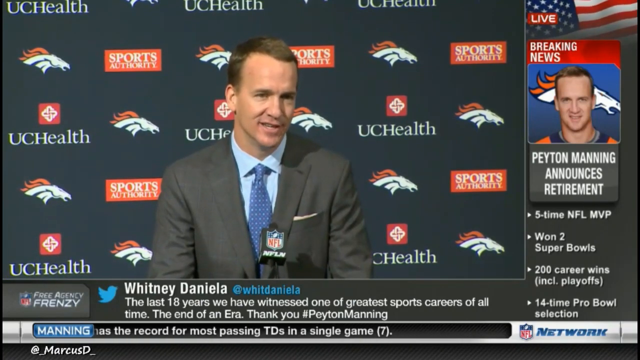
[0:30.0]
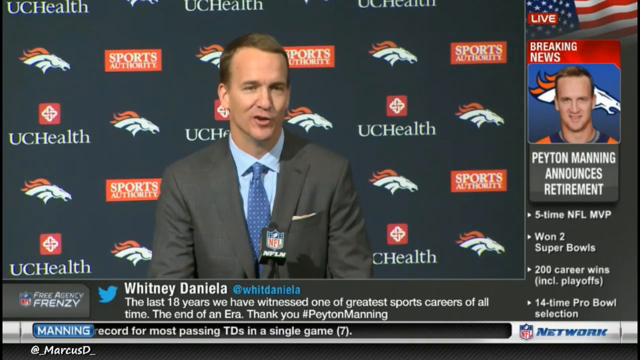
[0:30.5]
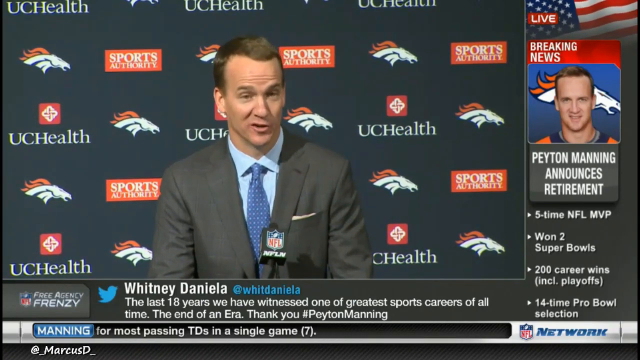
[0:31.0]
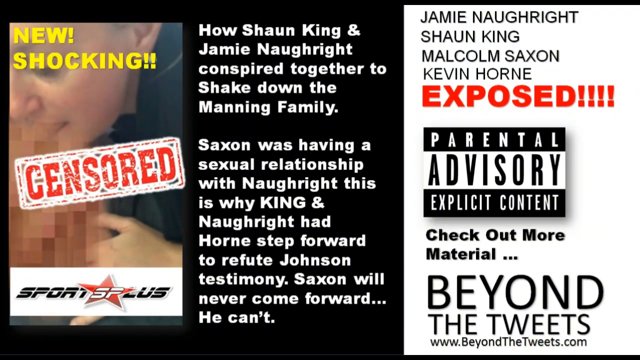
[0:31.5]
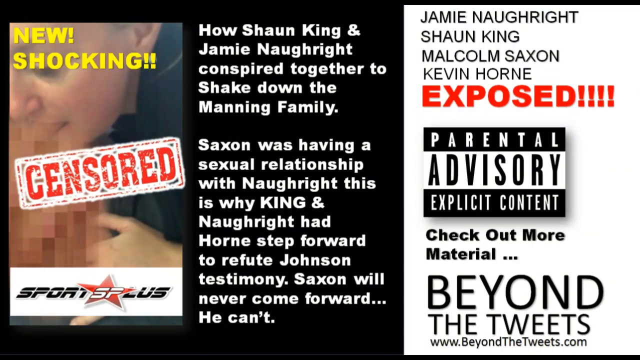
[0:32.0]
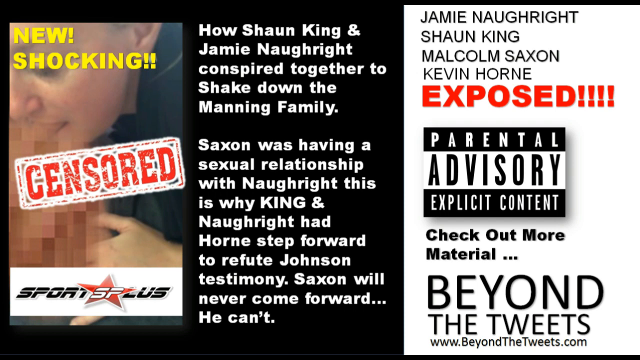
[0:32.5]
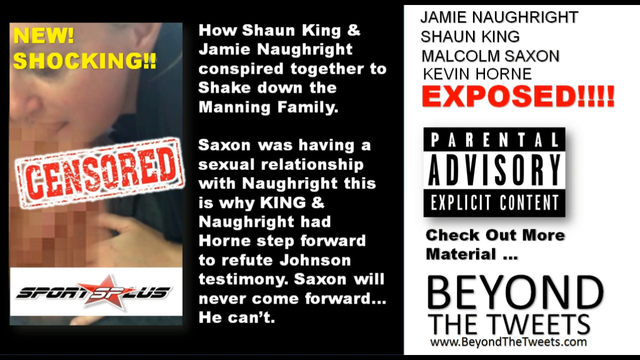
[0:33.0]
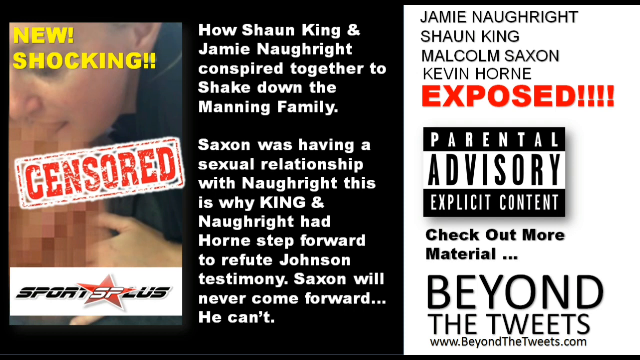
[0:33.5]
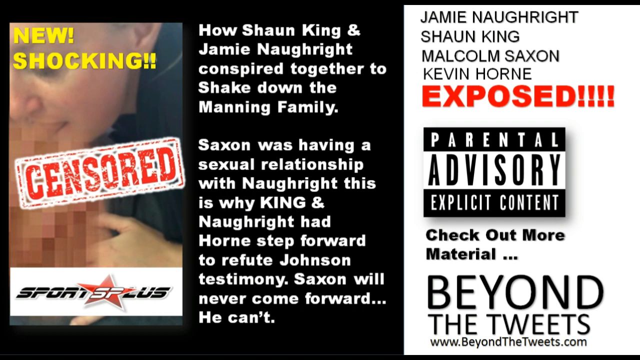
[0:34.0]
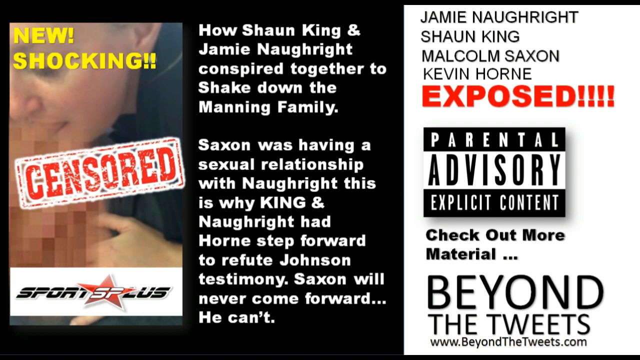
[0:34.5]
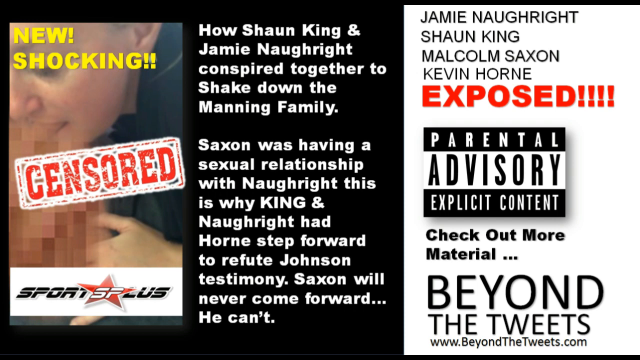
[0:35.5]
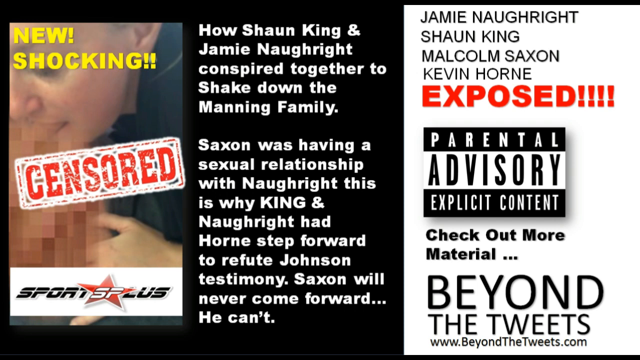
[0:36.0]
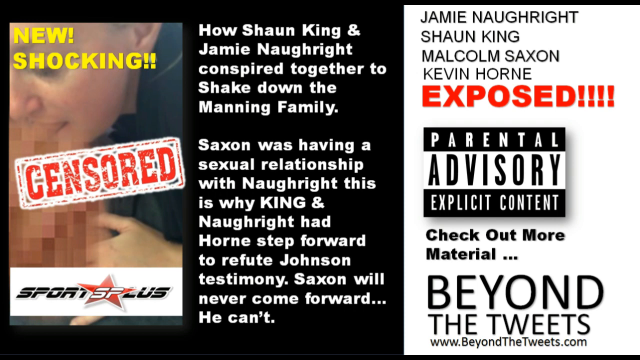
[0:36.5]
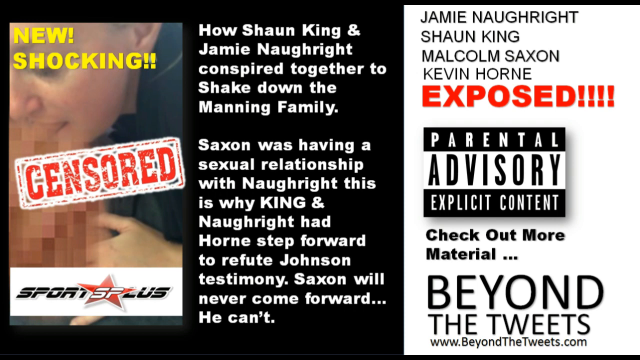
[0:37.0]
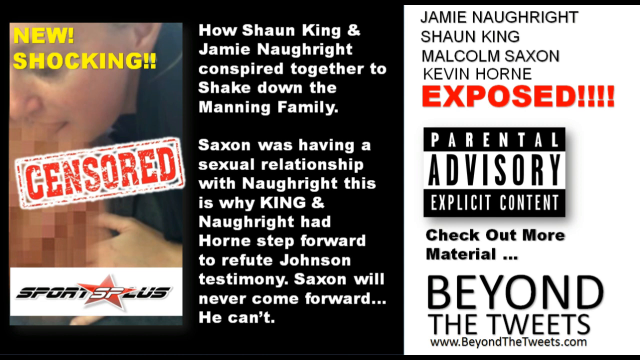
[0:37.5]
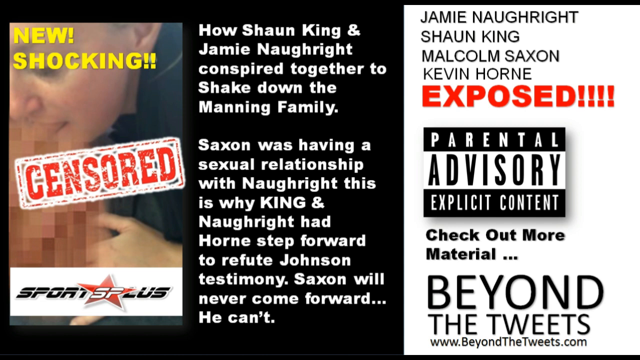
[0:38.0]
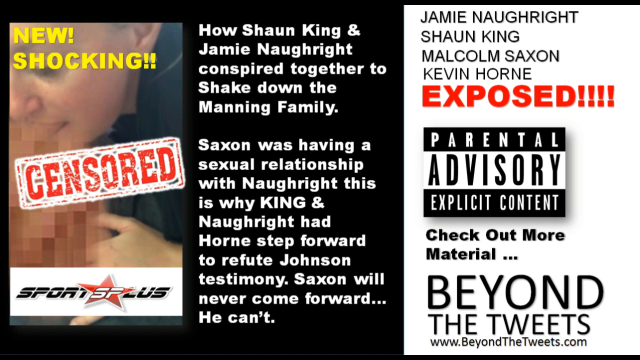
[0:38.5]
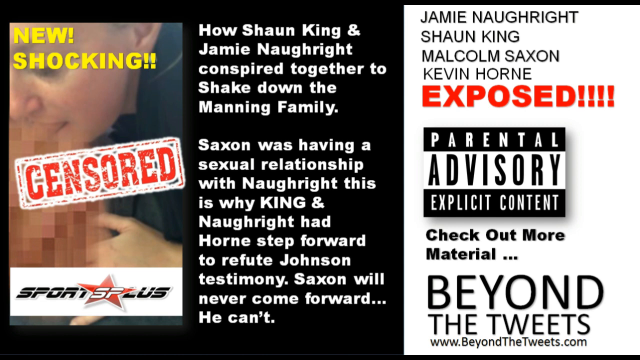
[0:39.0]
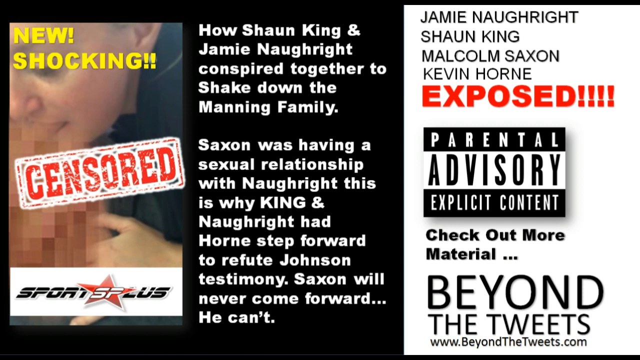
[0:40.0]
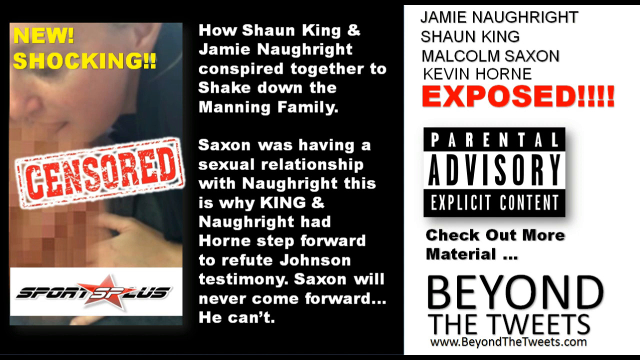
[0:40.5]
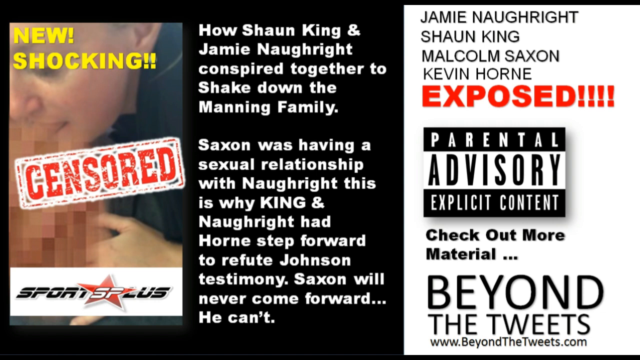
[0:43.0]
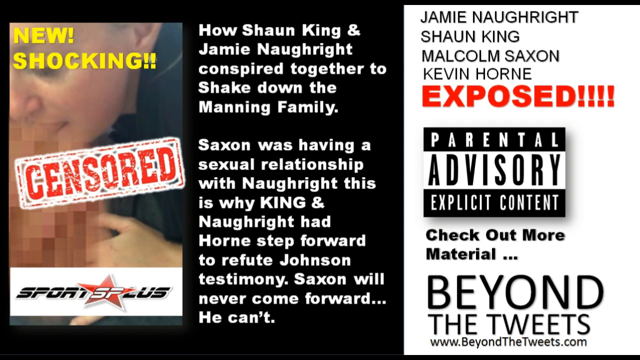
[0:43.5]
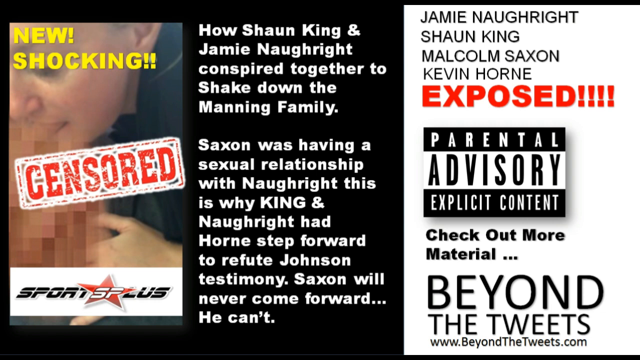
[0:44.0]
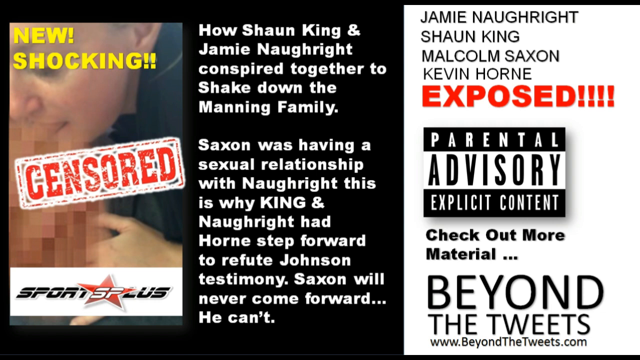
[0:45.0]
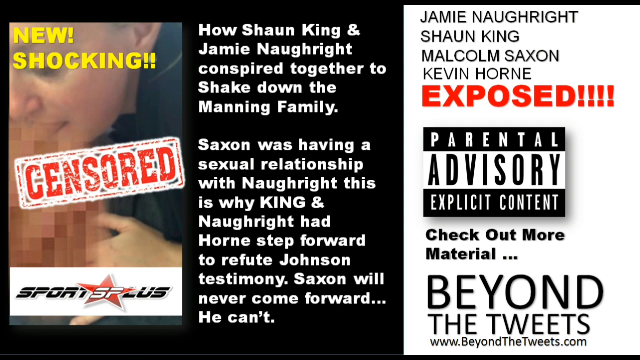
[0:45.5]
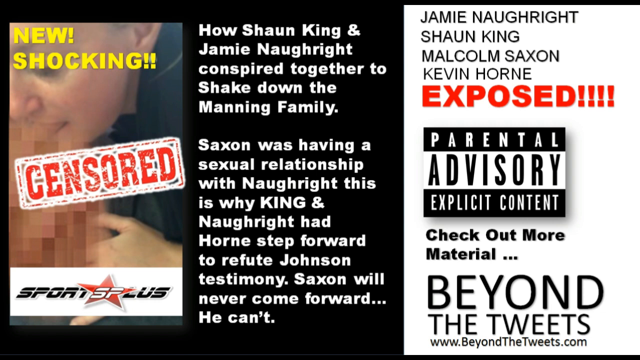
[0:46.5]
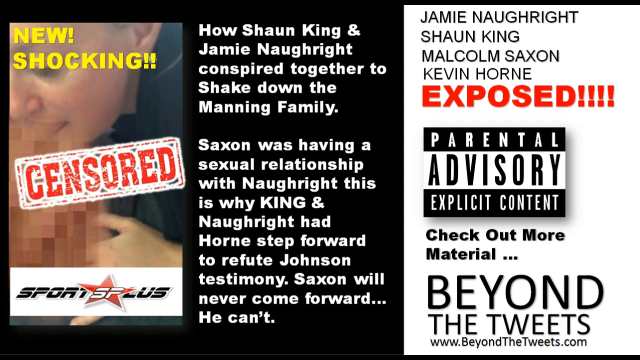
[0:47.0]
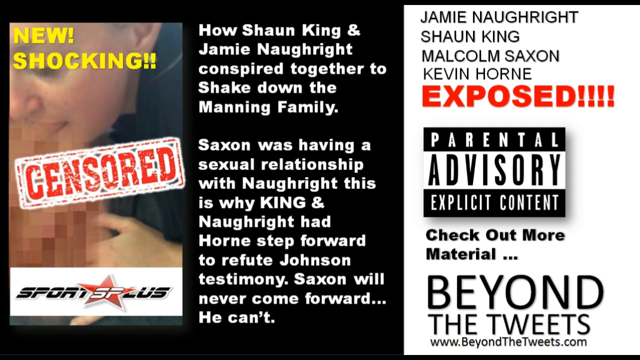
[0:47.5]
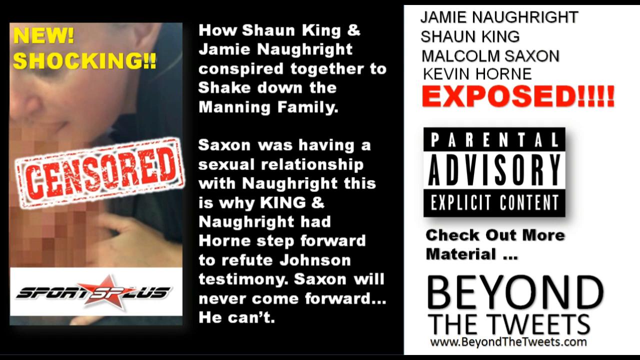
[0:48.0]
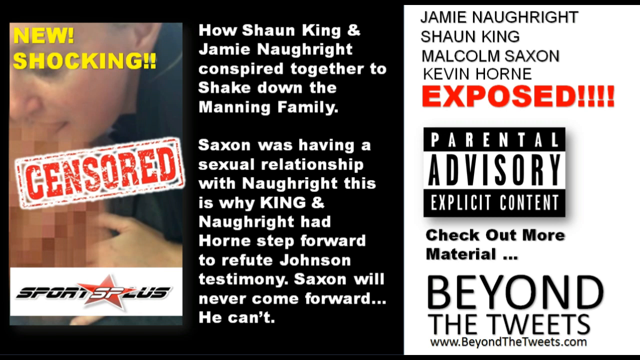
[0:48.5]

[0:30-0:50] Peyton Manning is still talking in front of the camera, and after a few seconds that ends. Shocking news then appears with a red "censored" tag on it. It presents exposed information, with text stating "how Sean King and Jamie Noe Wright conspired together to shake down the Manning family. Saxon was having a sexual relationship with Noe Wright. This is why King and Noe Wright had one step forward to refute Johnson's testimony." The exposed information concerns Jamie Noe Wright, Sean King, Malcolm Saxon, and Kevin Wong. A disclaimer reads "parental advisory, explicit content," and there is a "check out more material" message along with beyond the tweets text. On the left is a person's face, whose gender is unclear; the middle holds the full text of the tweet, and the far right has the disclaimer and the "check out for more material" message.